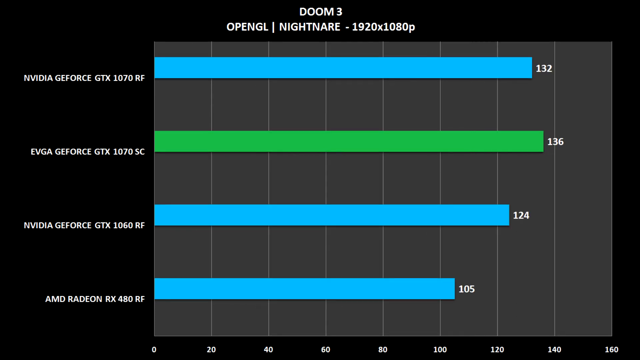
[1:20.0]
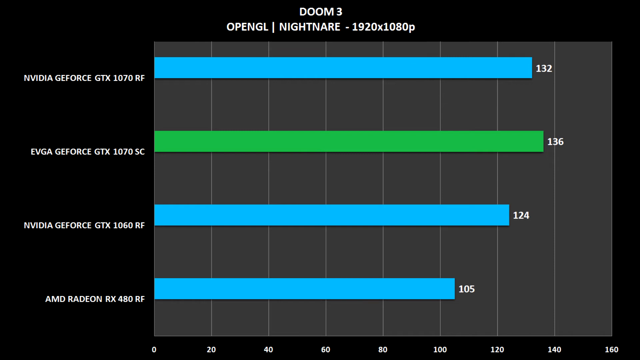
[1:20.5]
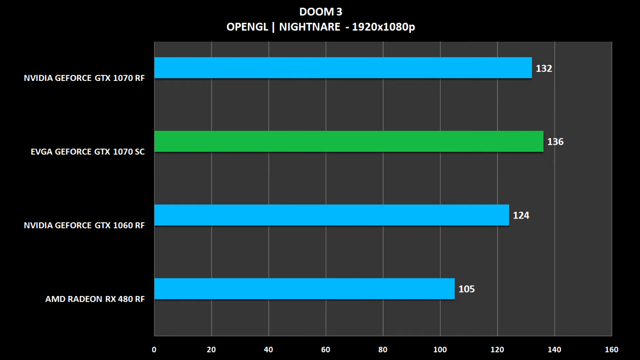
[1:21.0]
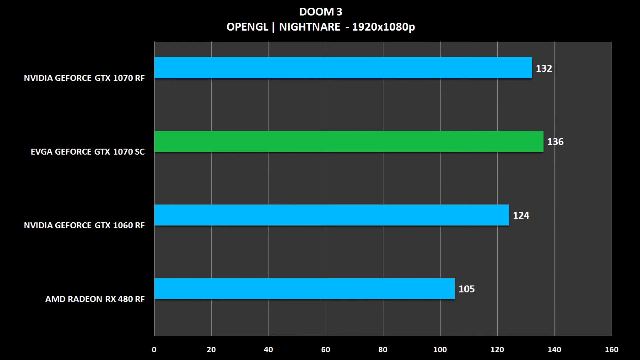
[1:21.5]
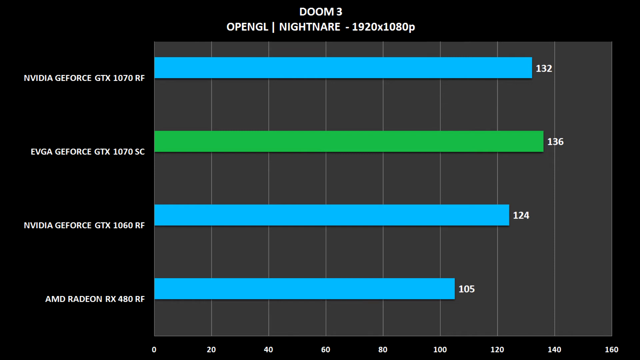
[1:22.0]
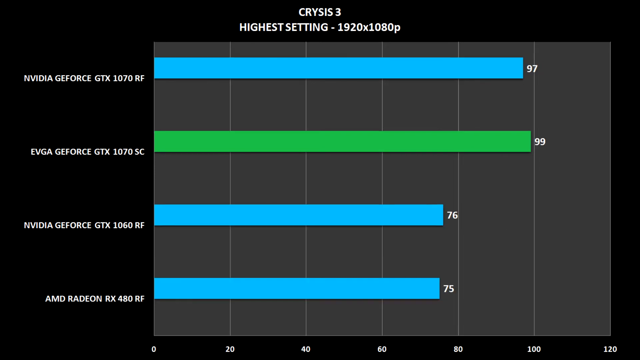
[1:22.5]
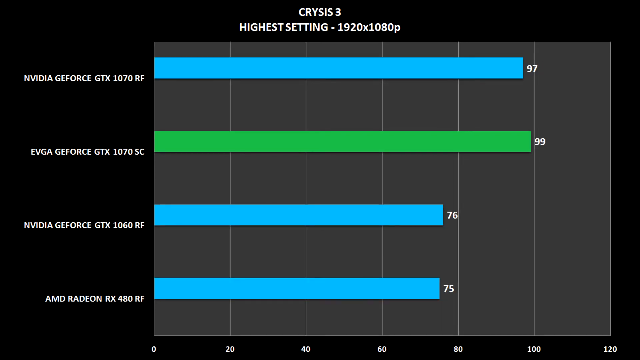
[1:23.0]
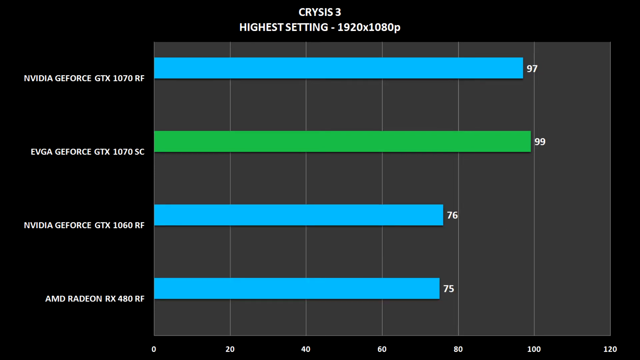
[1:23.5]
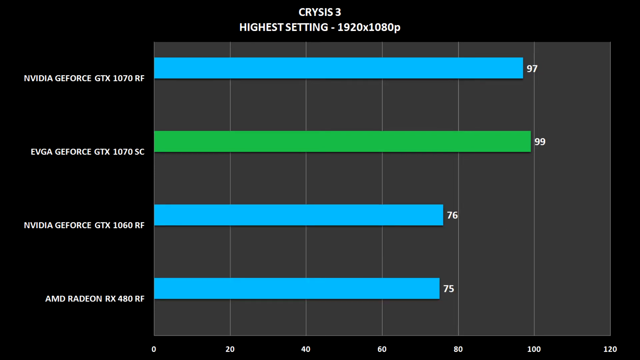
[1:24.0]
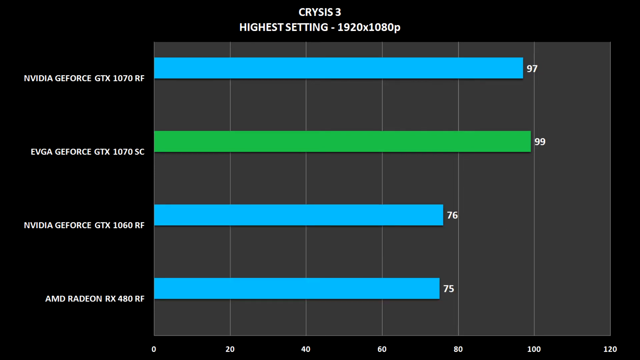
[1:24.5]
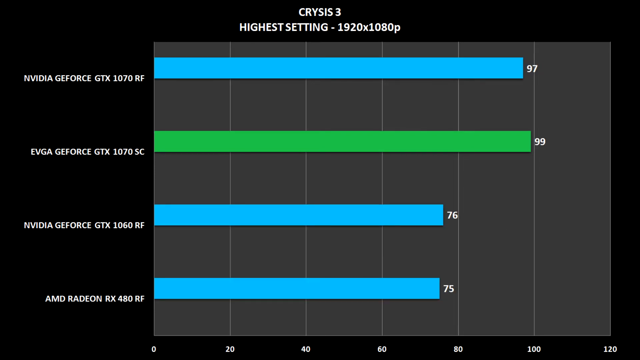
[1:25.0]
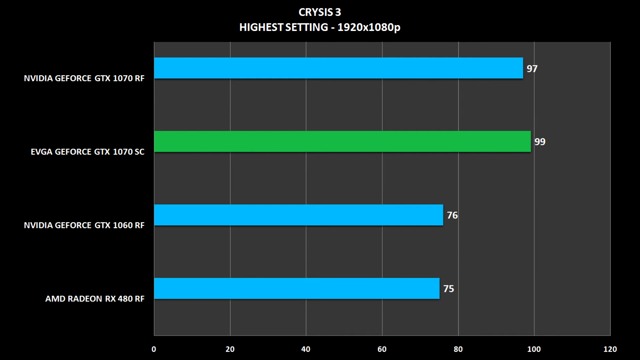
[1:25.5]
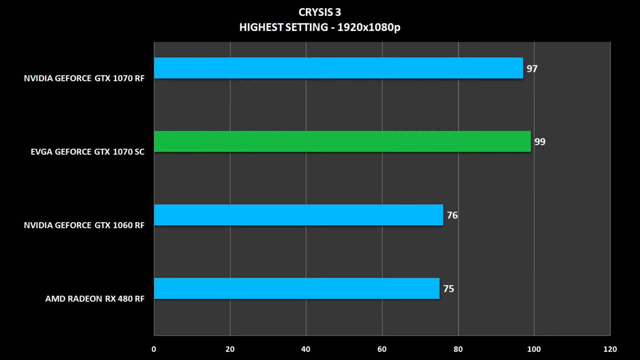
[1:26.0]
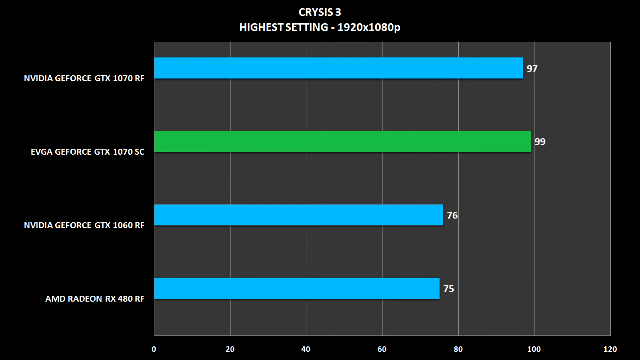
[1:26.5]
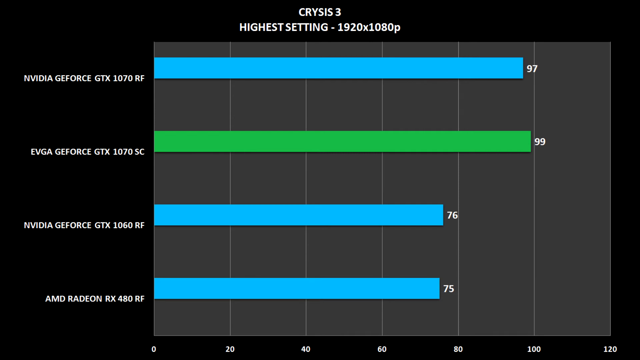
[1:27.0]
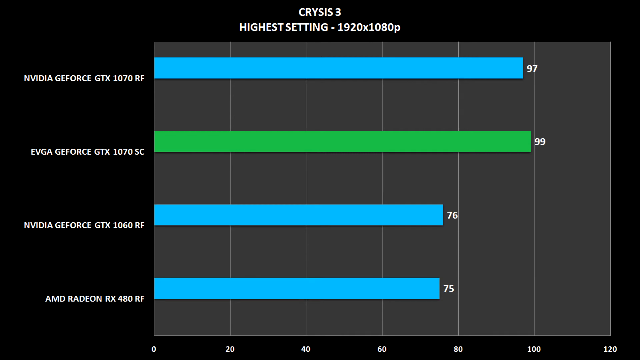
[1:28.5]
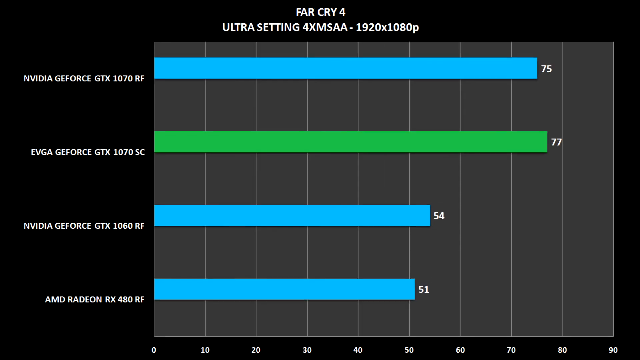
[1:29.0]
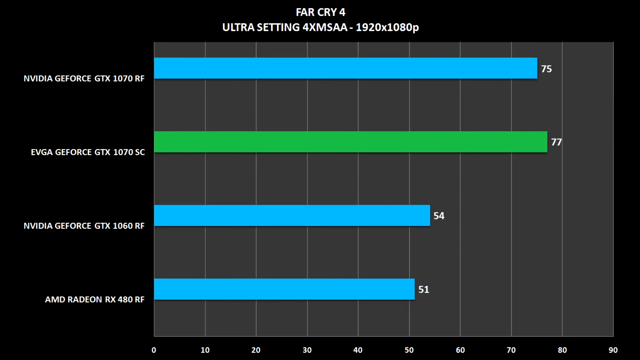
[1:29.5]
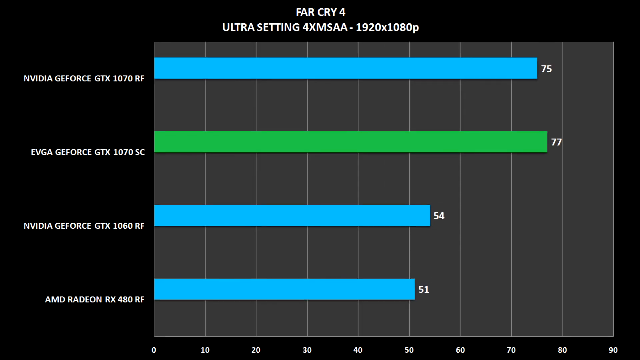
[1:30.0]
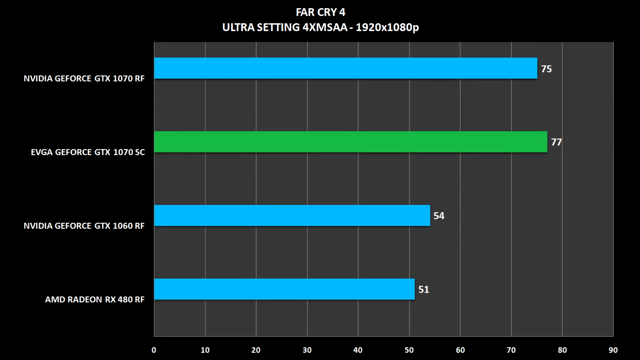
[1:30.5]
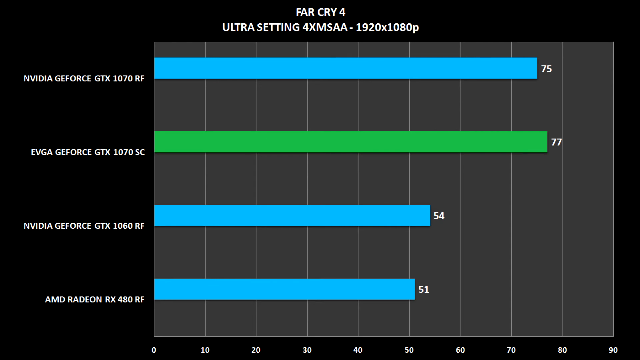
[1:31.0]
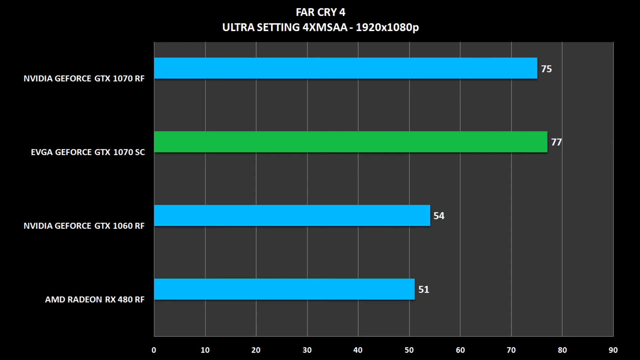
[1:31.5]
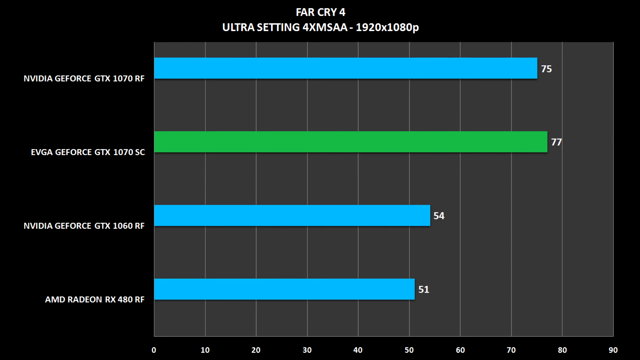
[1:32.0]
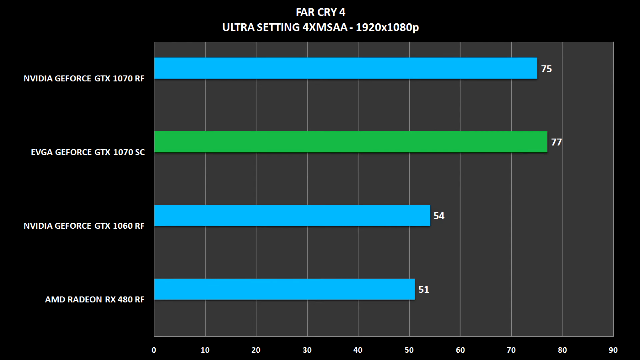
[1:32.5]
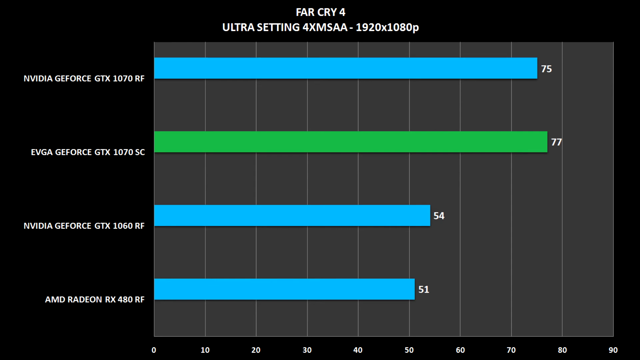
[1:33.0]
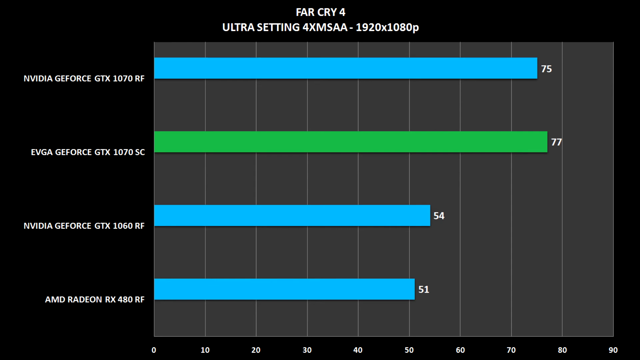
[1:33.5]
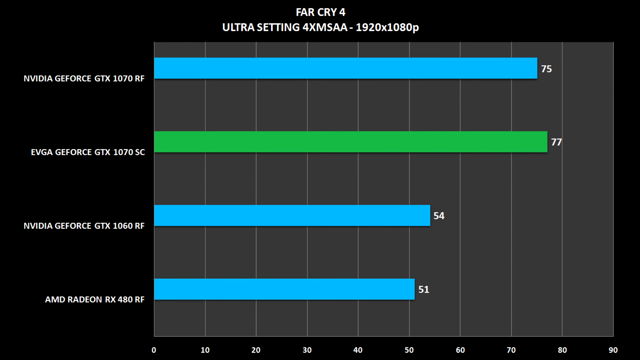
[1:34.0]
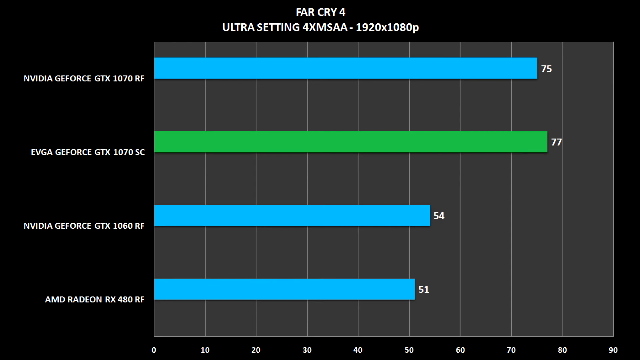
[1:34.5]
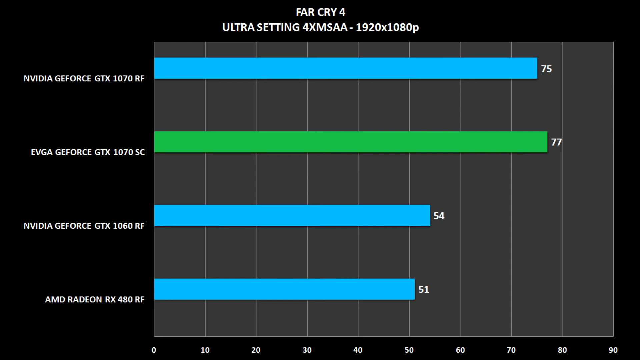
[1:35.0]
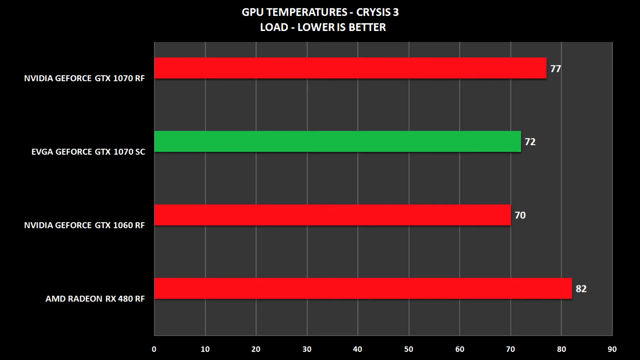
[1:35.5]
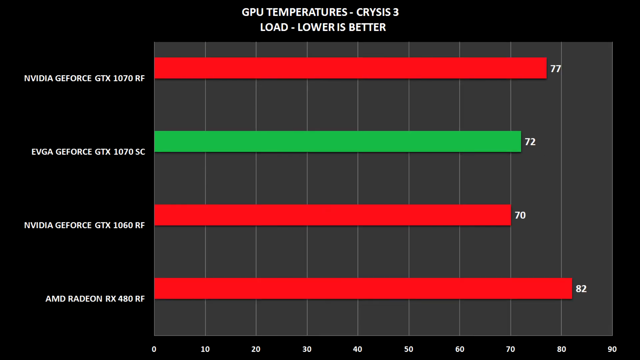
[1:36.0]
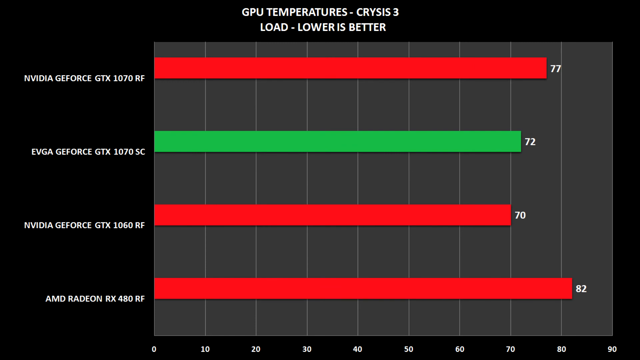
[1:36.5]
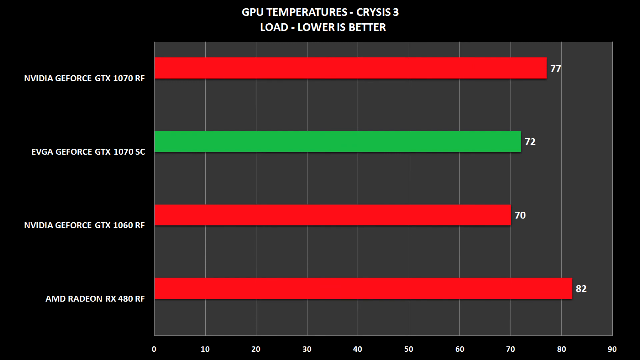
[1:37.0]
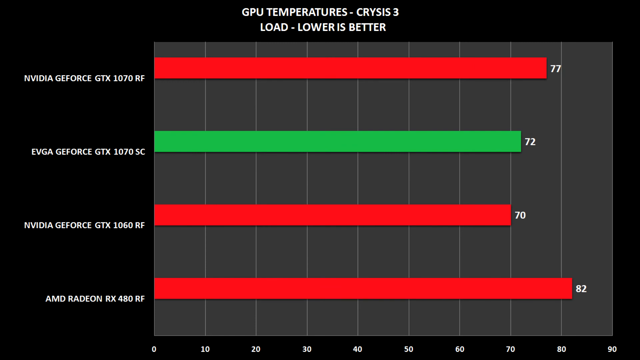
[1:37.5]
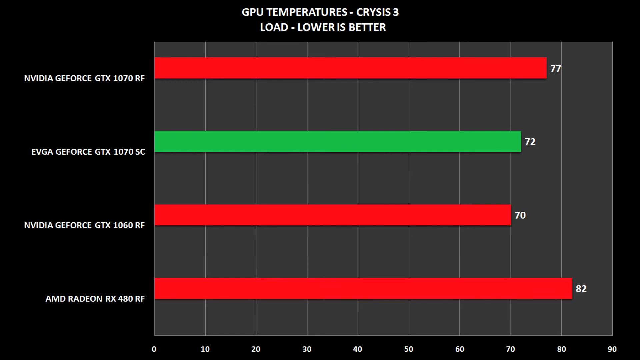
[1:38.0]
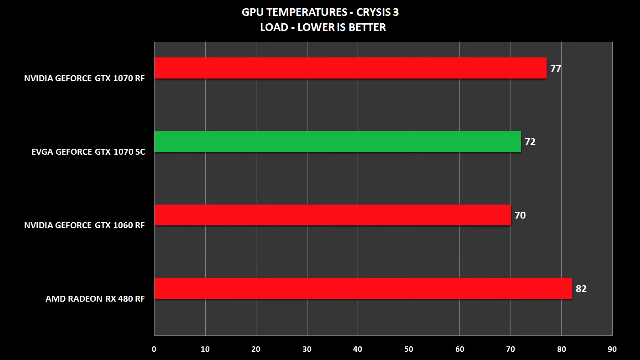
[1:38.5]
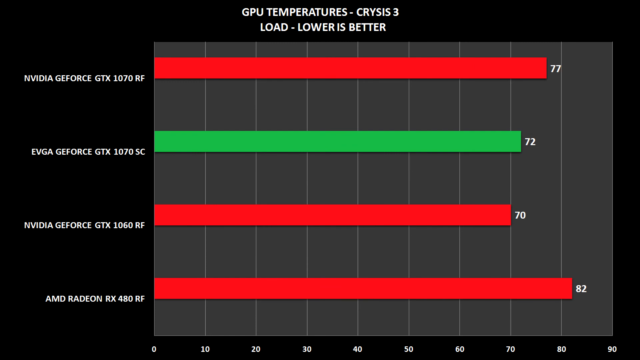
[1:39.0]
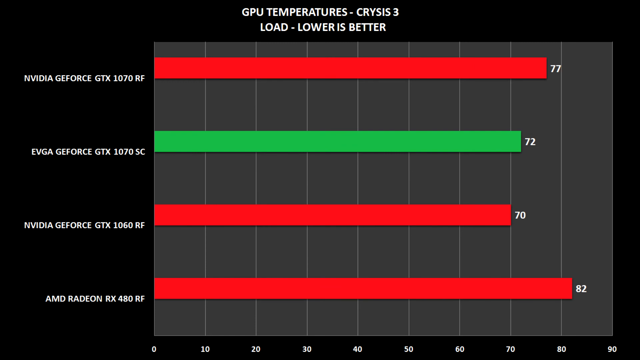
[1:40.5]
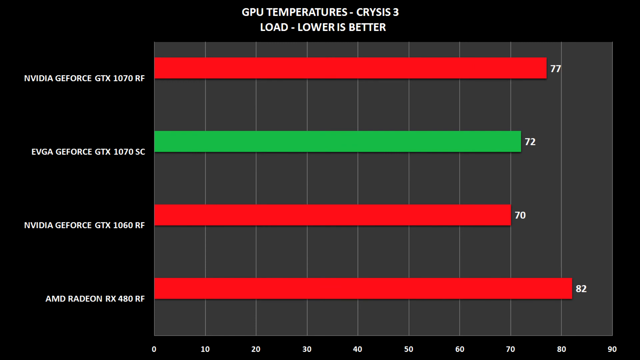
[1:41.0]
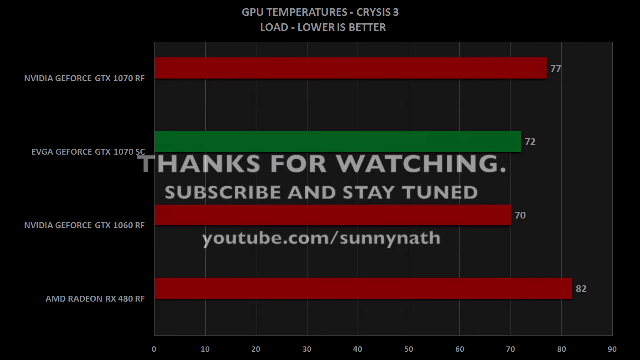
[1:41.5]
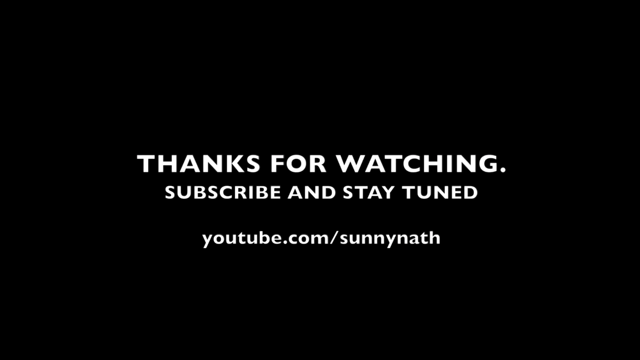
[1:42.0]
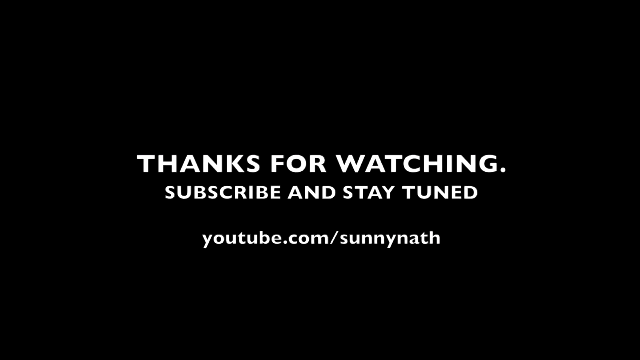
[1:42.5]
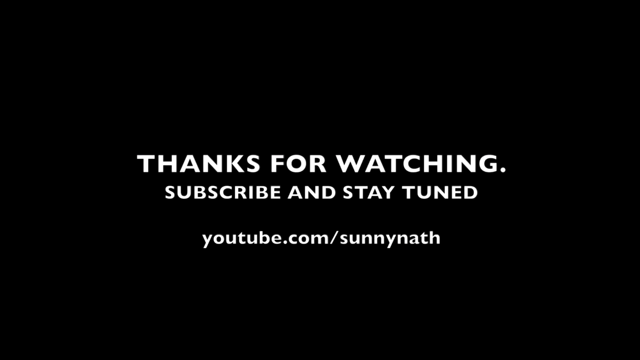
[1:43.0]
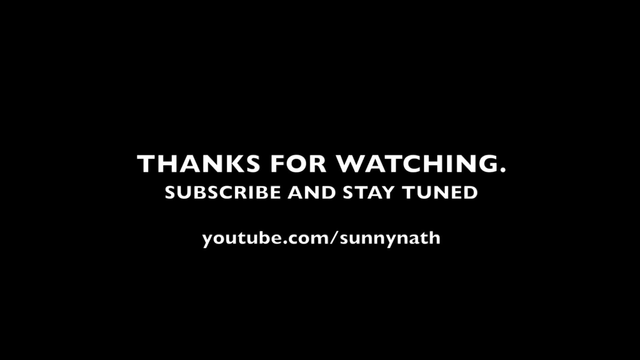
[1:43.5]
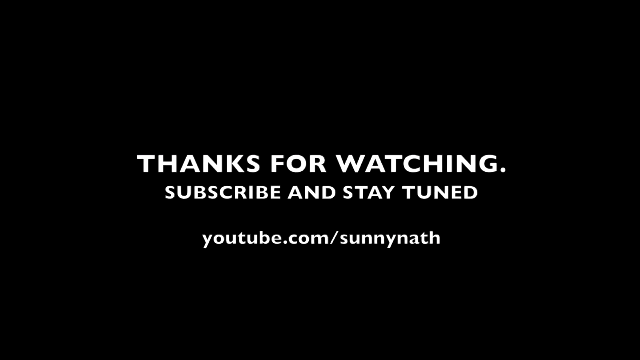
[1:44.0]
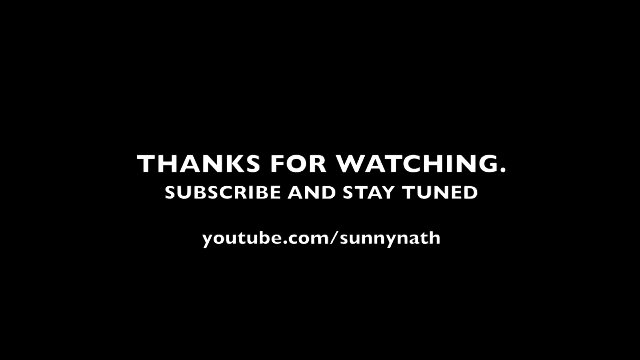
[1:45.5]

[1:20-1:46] A chart appears with a title beginning "DOOM 3 OpenGL" and including 1920x1080p, measuring several graphics cards: the NVIDIA GeForce GTX 1070RF, the EVGA GeForce GTX 1070SC, the NVIDIA GeForce GTX 1060RF, and the AMD Radeon RX 480RF. Next come statistics for Crysis 3 with the same video cards, beginning with the NVIDIA GeForce GTX 1070RF and ending with the AMD Radeon RX 480RF. Statistics for other games follow, including Far Cry 4, and then GPU temperatures for Crysis 3. At the end, the screen reads "thanks for watching, subscribe, and stay tuned".